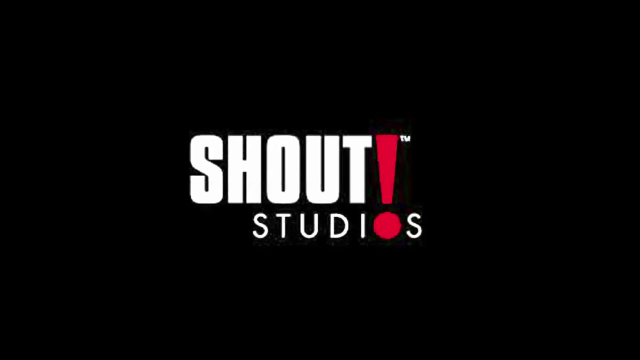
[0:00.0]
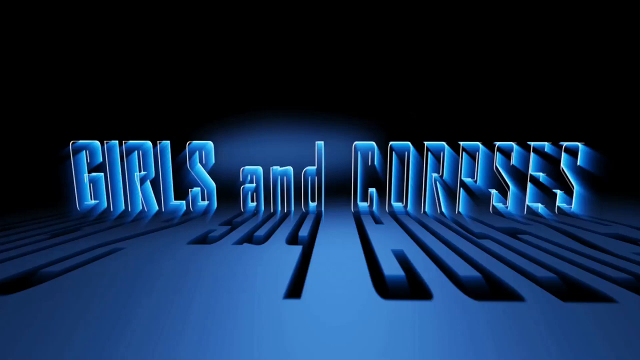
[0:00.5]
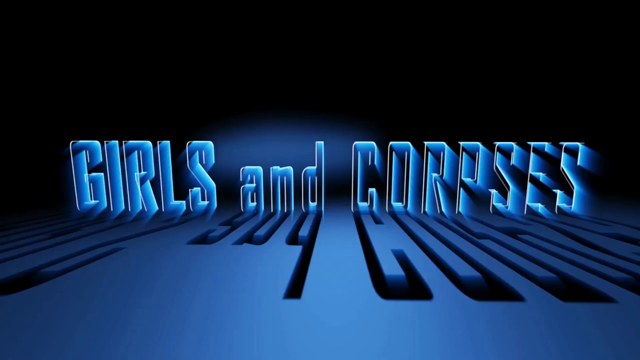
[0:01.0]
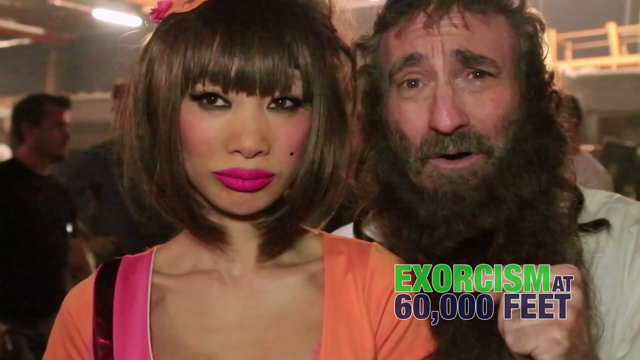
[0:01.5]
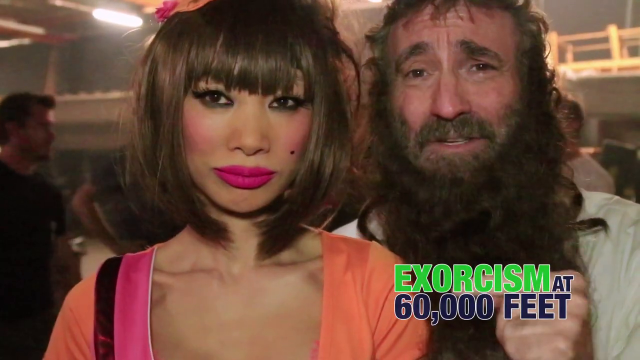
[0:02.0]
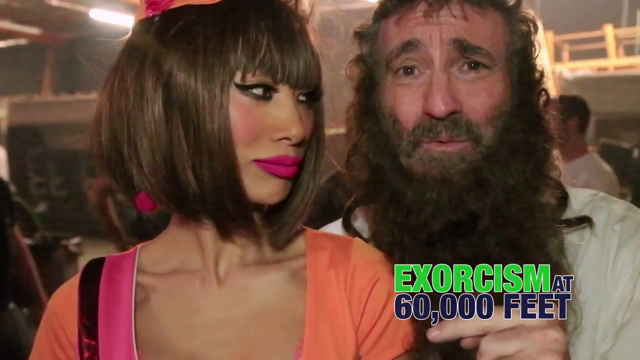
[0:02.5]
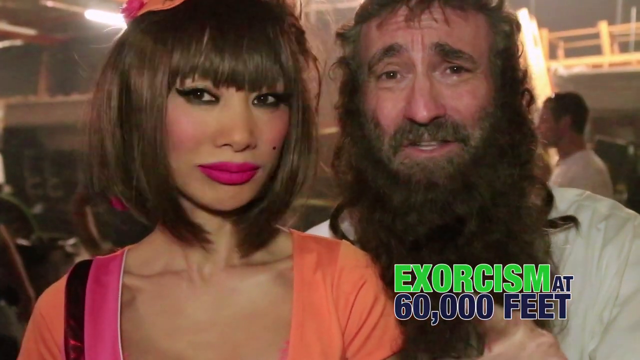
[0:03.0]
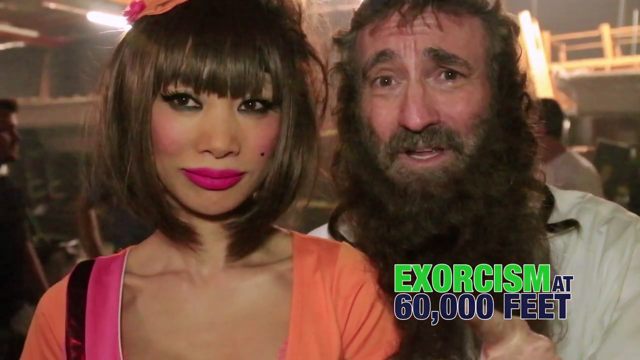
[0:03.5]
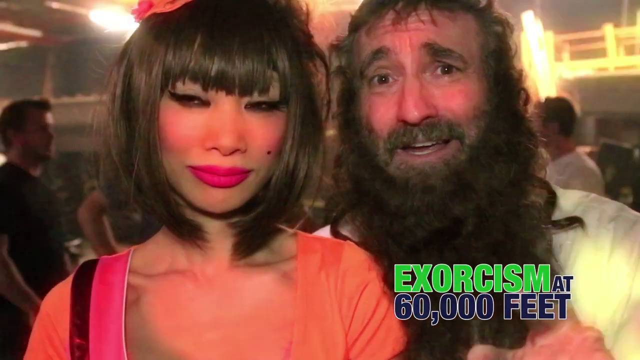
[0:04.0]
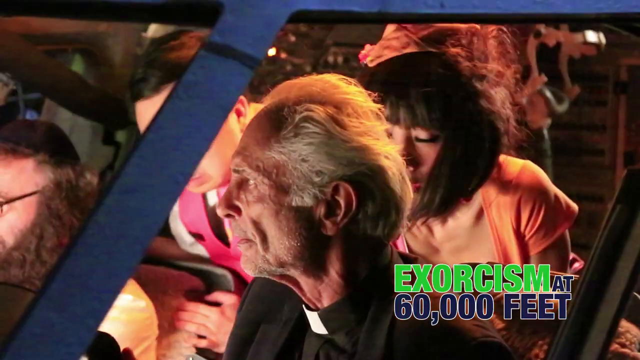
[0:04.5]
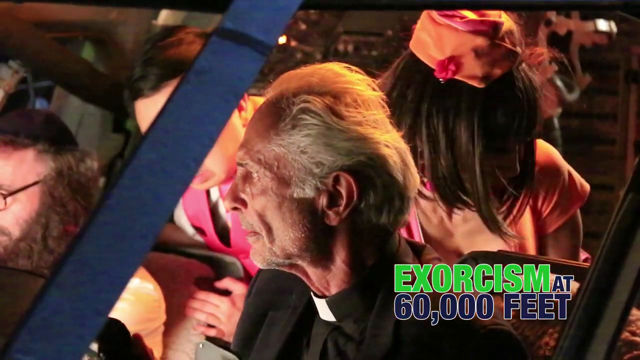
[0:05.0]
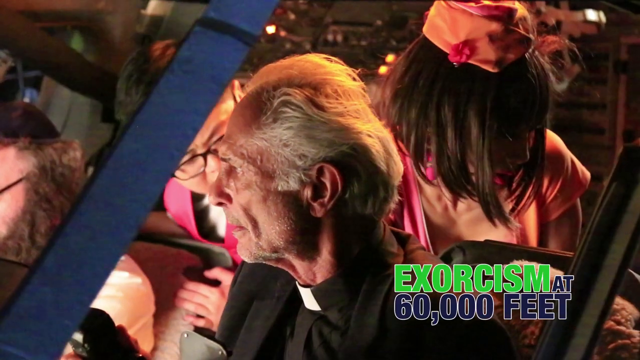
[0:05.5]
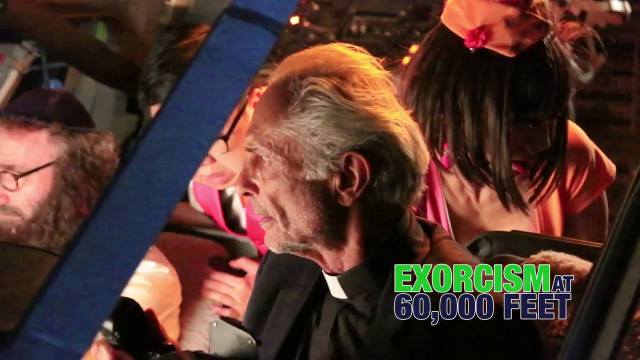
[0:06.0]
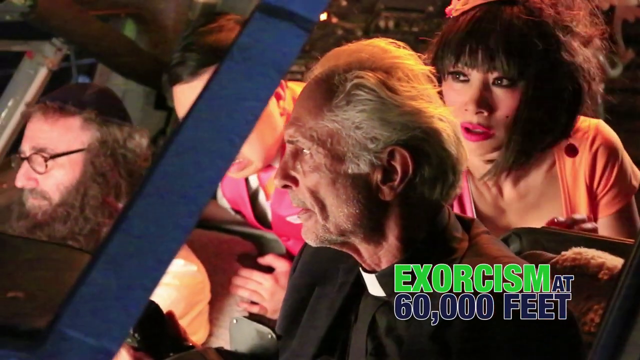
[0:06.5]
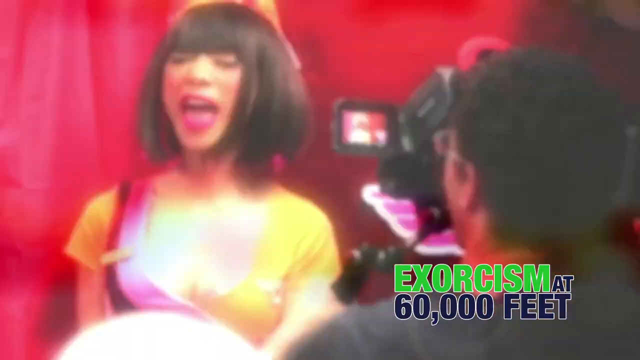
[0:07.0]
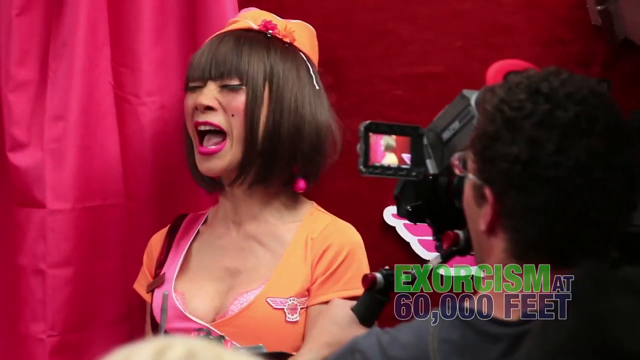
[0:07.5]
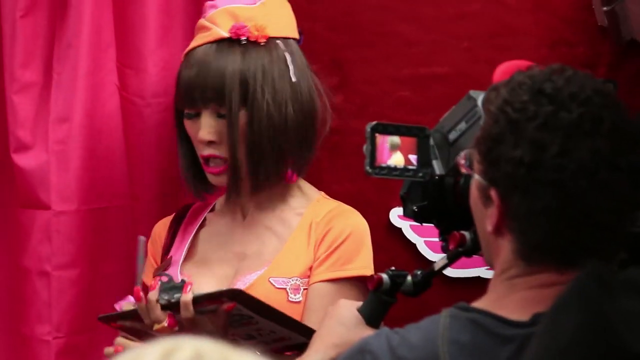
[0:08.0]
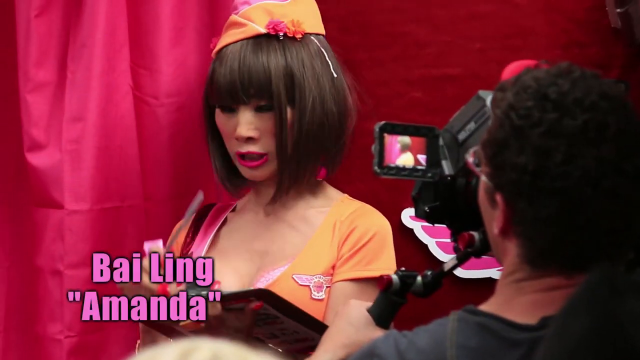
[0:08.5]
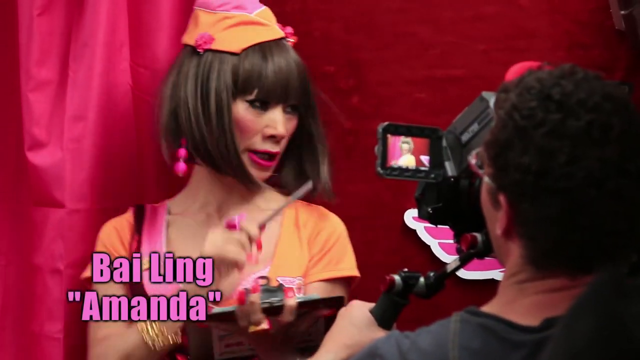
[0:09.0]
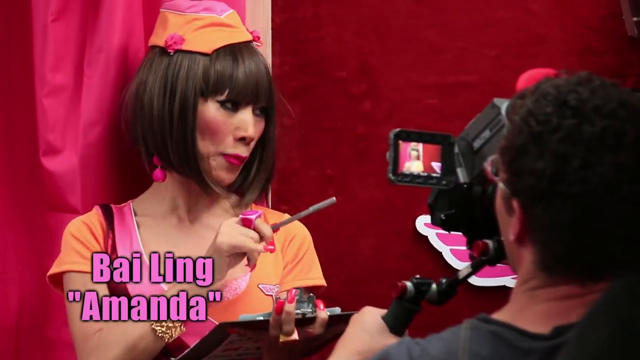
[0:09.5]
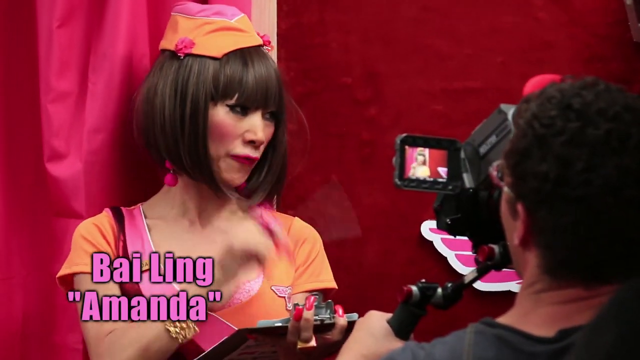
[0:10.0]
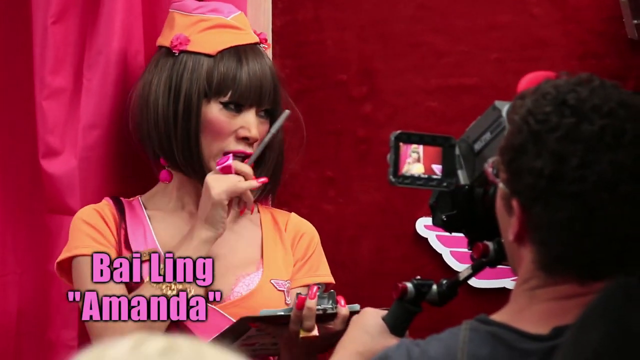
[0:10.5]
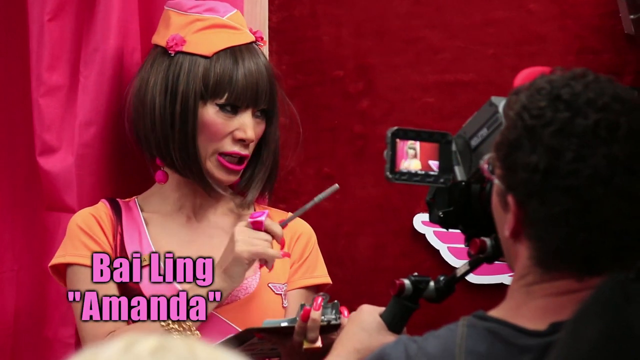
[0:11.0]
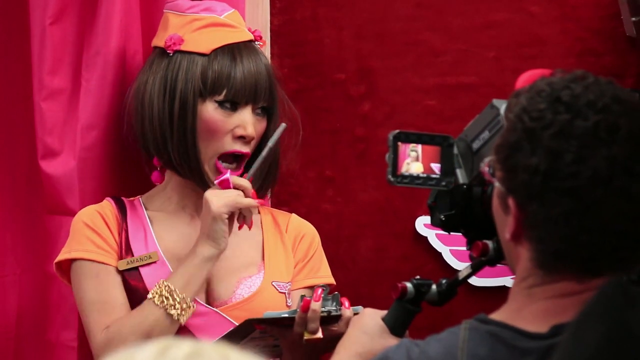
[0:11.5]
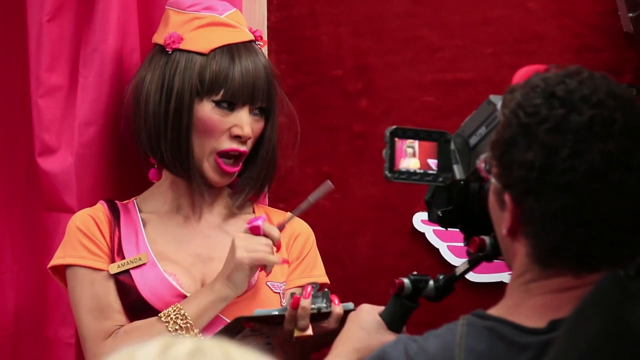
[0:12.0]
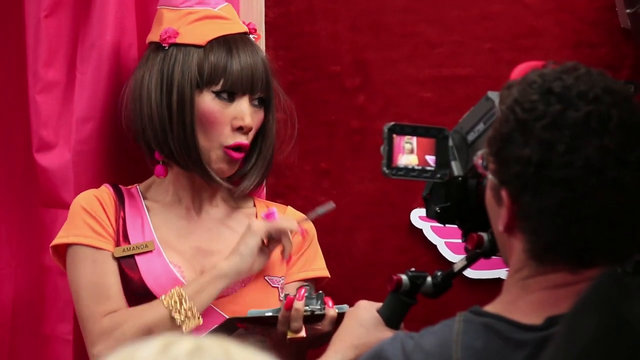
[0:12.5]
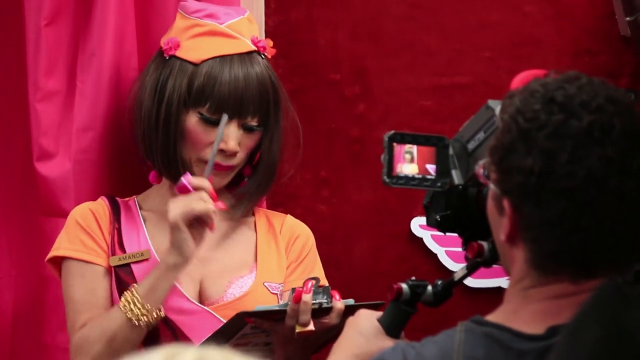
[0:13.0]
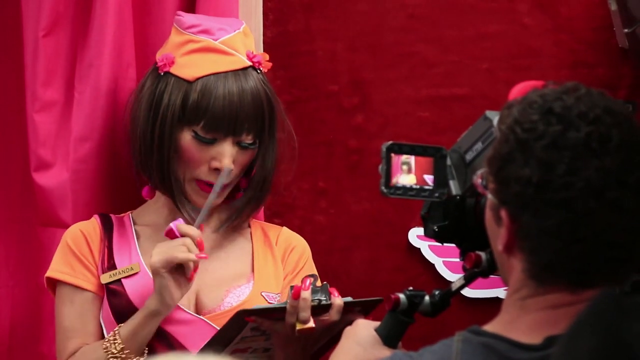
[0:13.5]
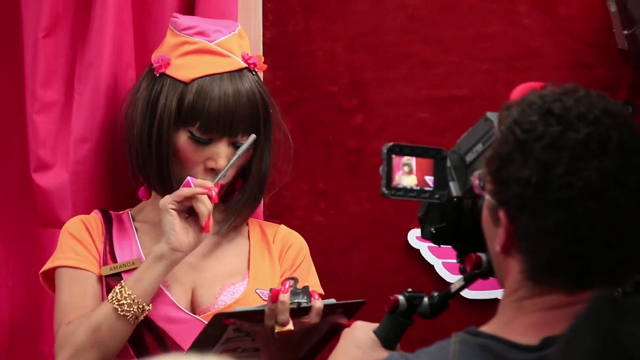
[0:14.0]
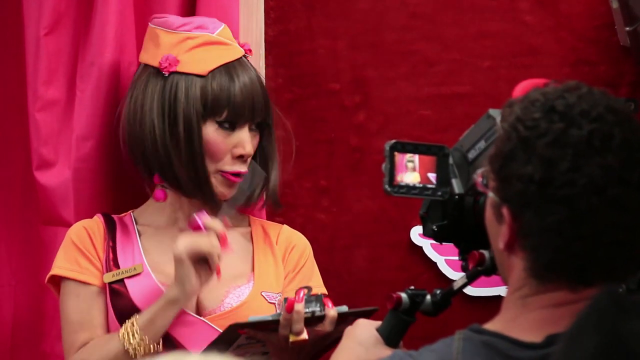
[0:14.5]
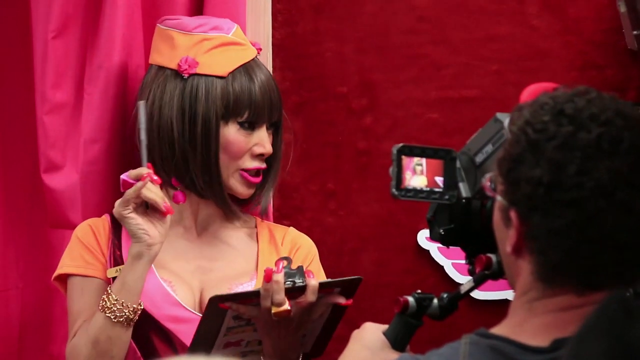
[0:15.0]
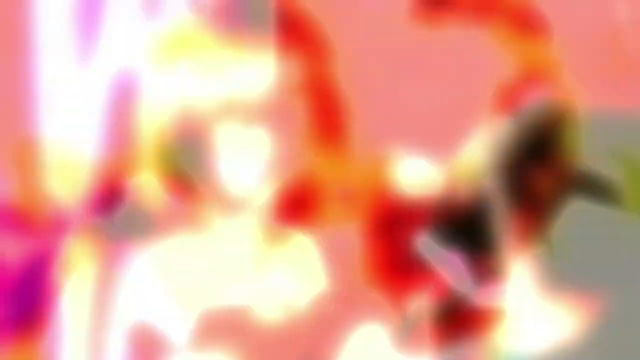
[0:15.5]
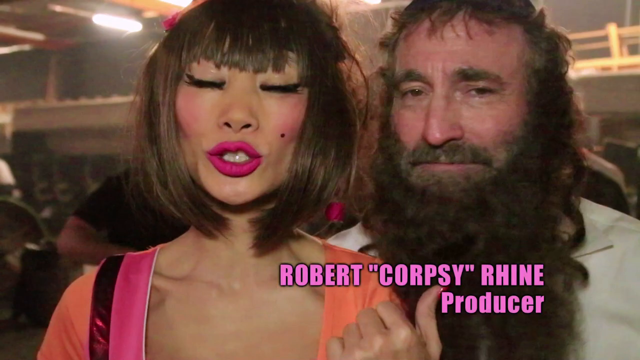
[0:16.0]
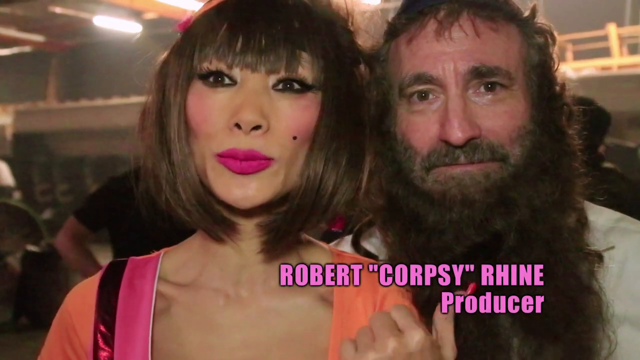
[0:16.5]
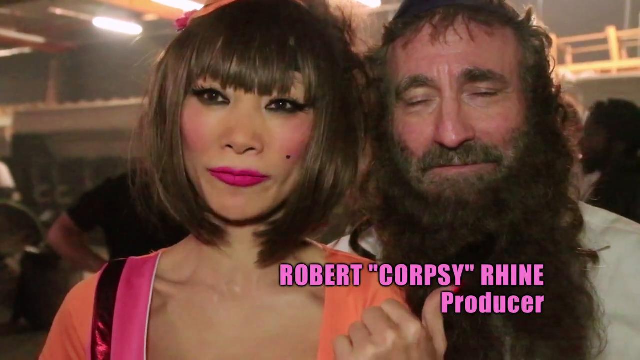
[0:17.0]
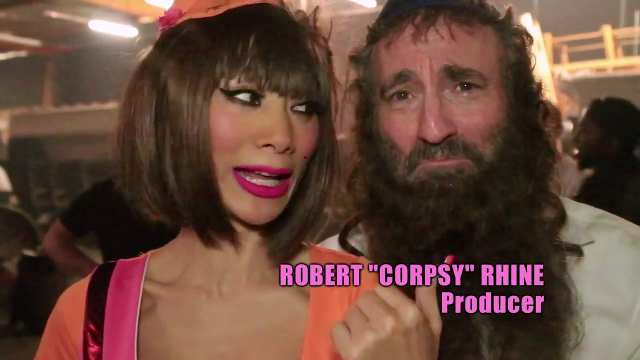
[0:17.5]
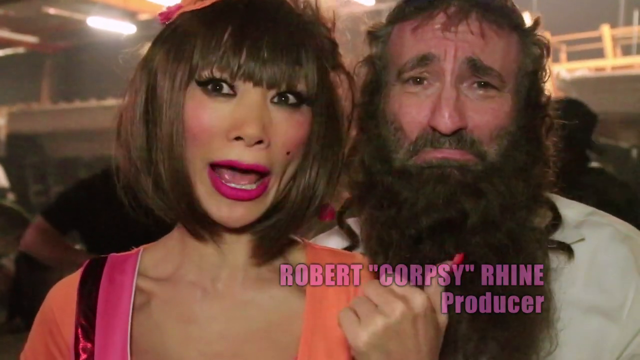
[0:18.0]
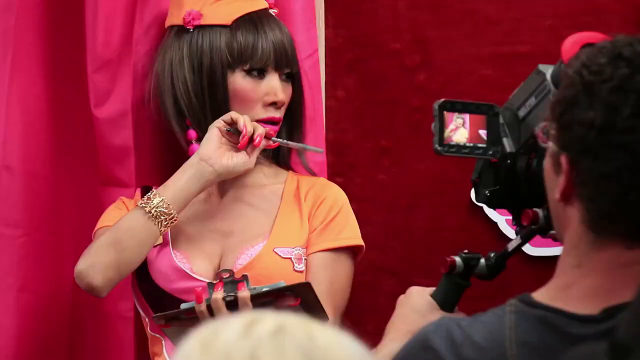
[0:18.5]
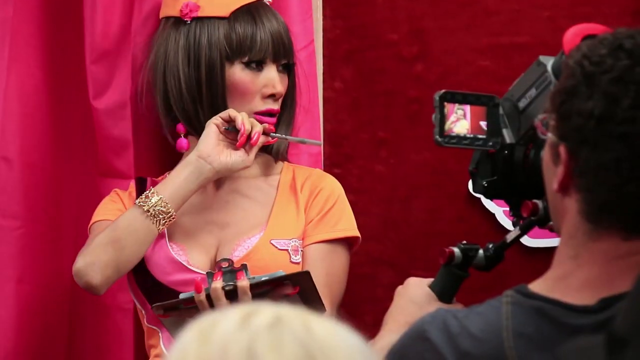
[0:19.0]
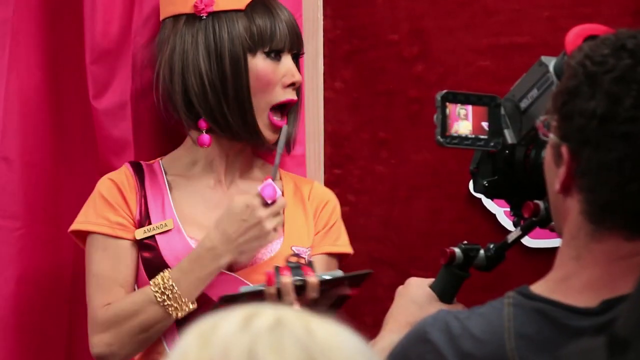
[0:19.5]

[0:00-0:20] The video opens with a logo for Shout Studios featuring a giant red exclamation point, followed by a logo for Girls and Corpses. Two people then talk at the camera. The man on the right, who has a full beard, is talking, and text at the bottom right of the screen reads "exorcism at 60,000 feet". A woman stands to the left; she looks like she may be dressed as a plane stewardess and wears bright pink lipstick. Next comes what looks like a clip from a TV show, with what appears to be a priest with gray hair combed back. The stewardess holds a clipboard in her left hand and a pen in her right. Someone to the viewer's right is filming her. She looks like she is screaming, then stops, and, holding the pen in her right hand, points it at someone off to her left as she turns her body to the left, looks over at them and speaks. She wears a lot of makeup, her clothes are orange and pink, and a name tag reading "Amanda" is on the right side of her shirt. She has gold bracelets around her right wrist and red nail polish.